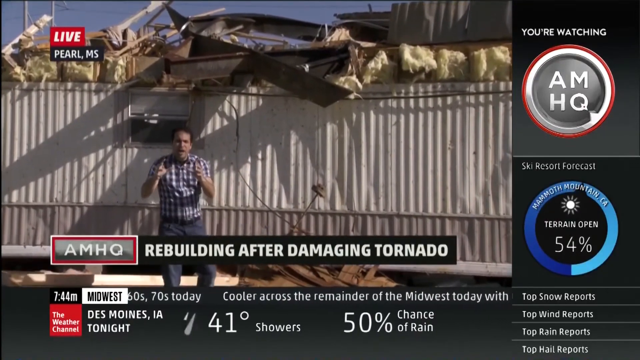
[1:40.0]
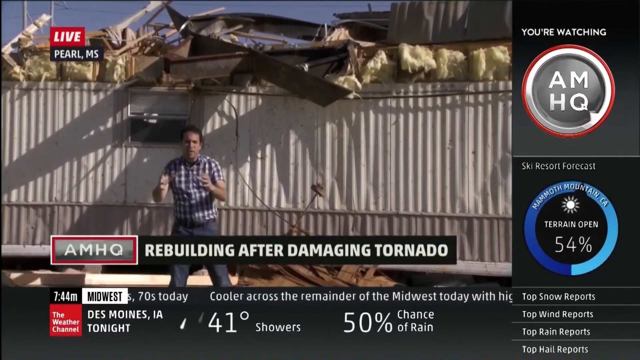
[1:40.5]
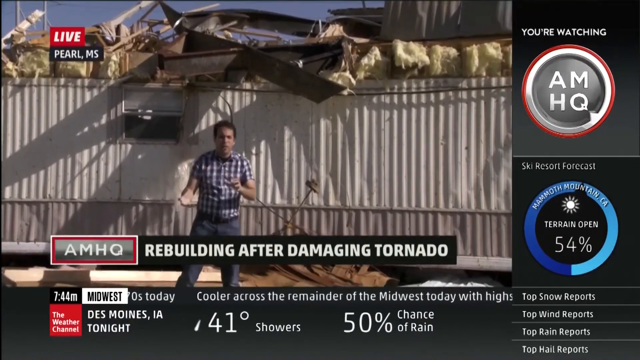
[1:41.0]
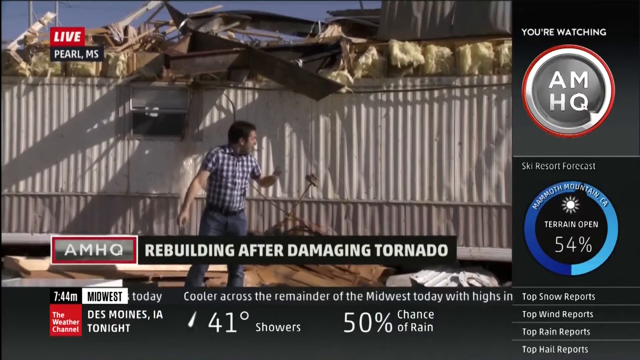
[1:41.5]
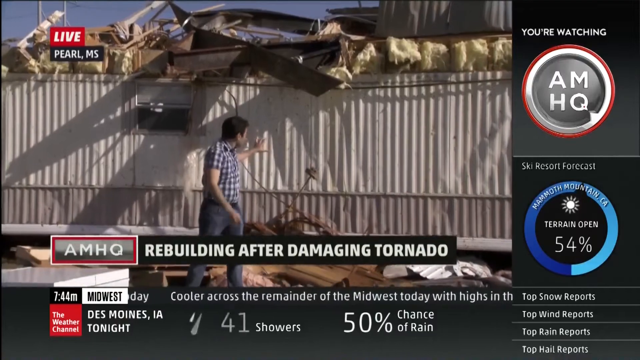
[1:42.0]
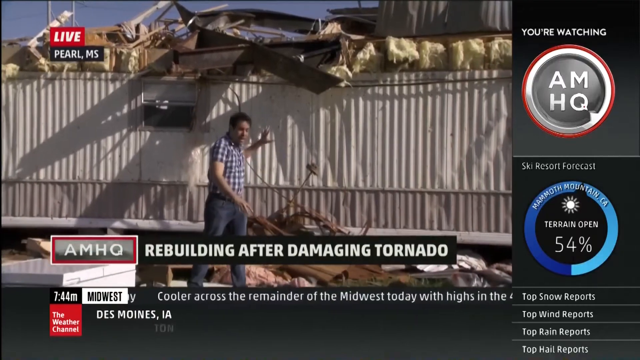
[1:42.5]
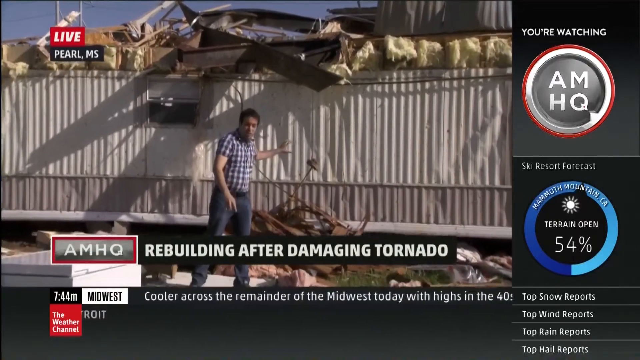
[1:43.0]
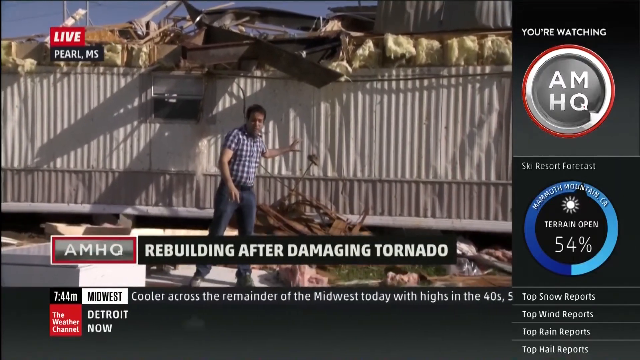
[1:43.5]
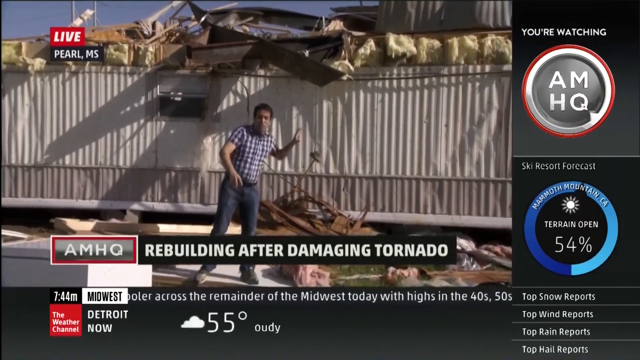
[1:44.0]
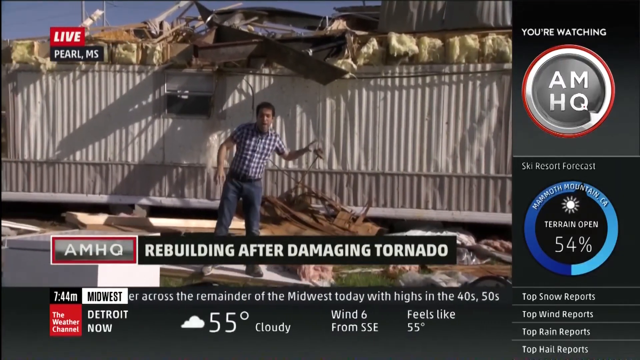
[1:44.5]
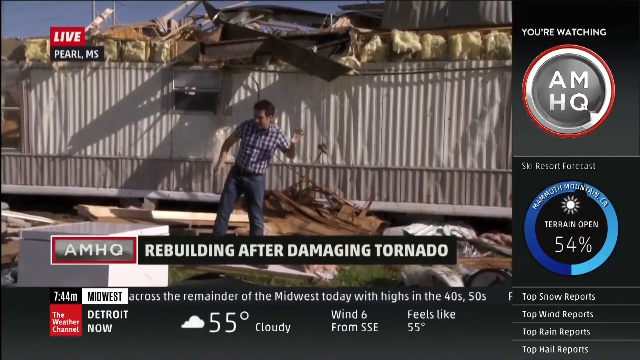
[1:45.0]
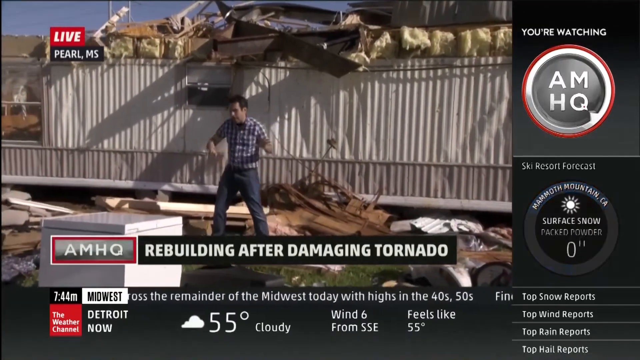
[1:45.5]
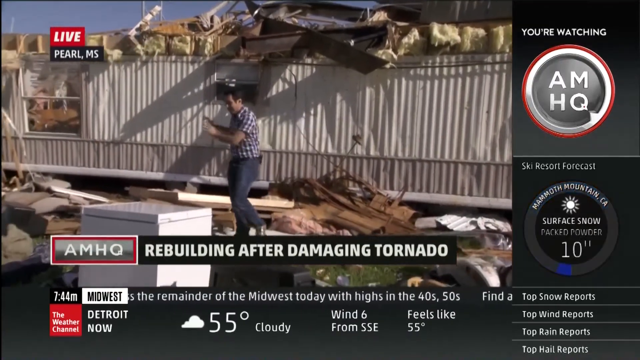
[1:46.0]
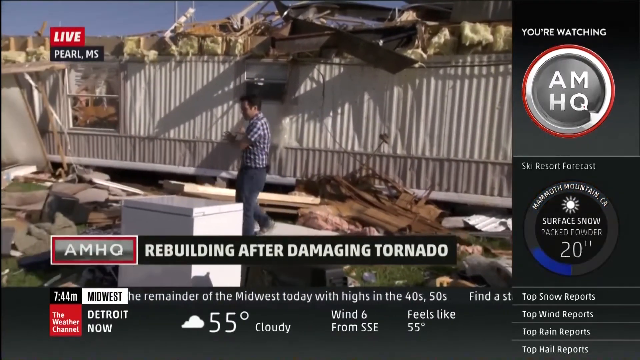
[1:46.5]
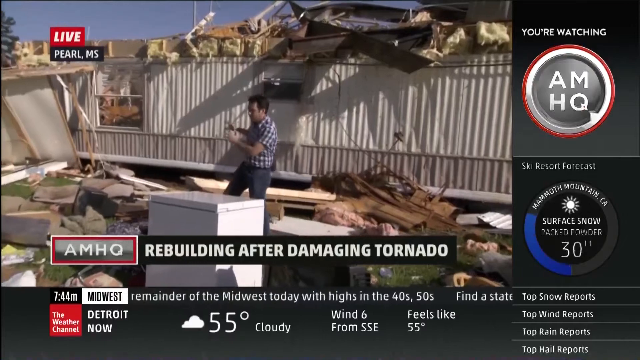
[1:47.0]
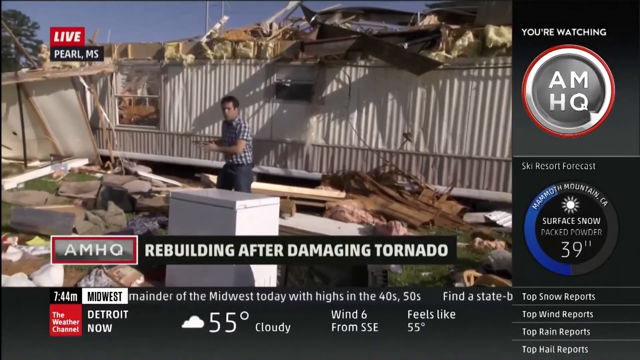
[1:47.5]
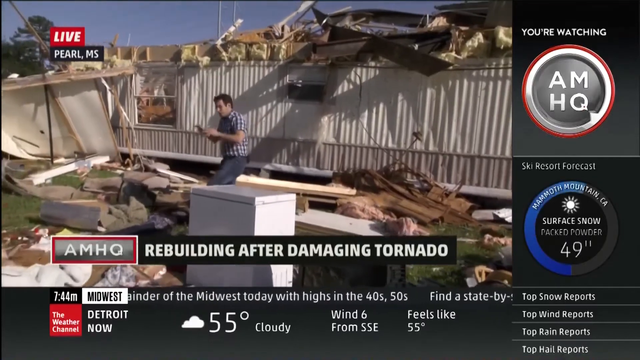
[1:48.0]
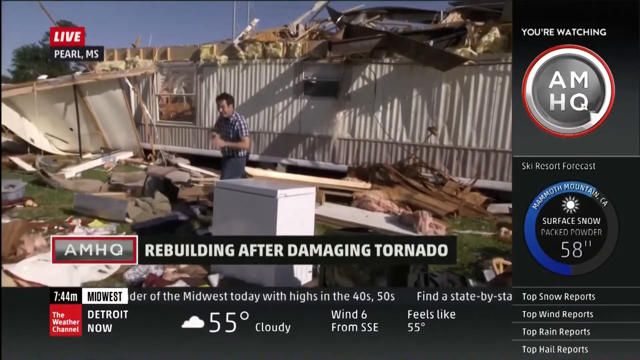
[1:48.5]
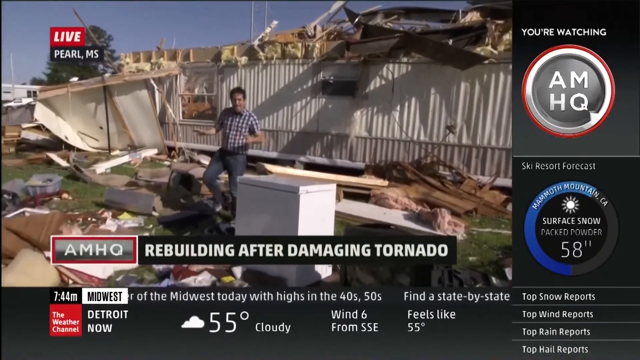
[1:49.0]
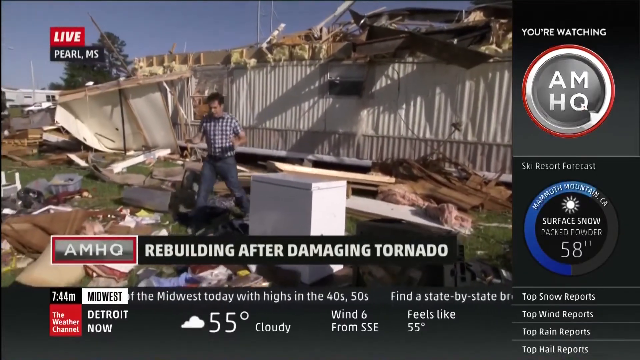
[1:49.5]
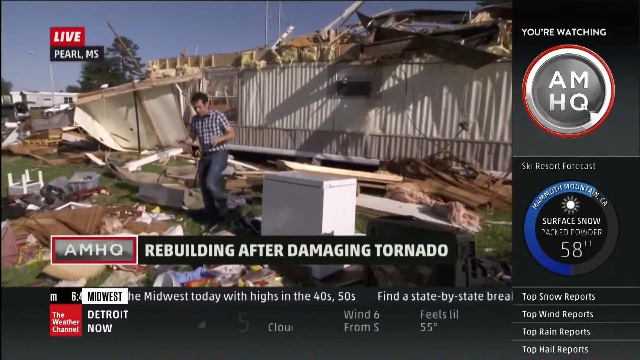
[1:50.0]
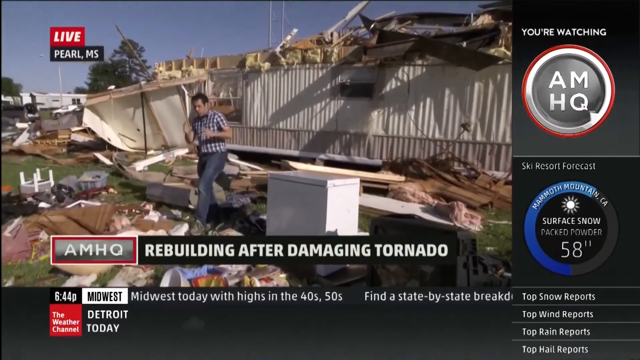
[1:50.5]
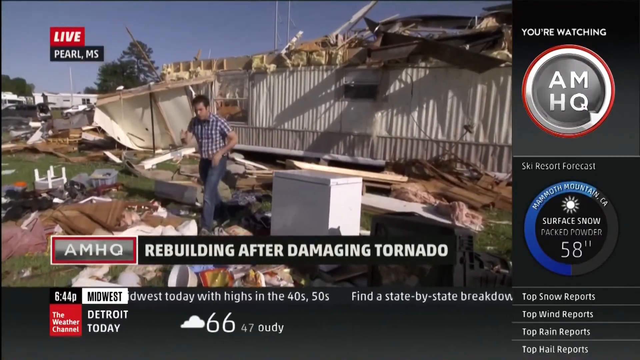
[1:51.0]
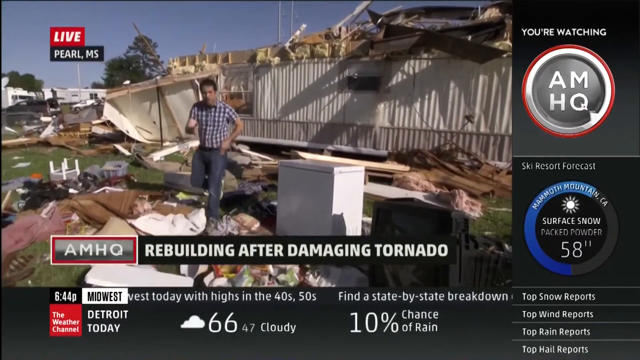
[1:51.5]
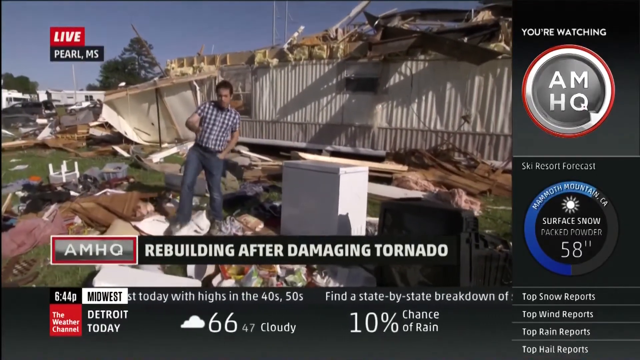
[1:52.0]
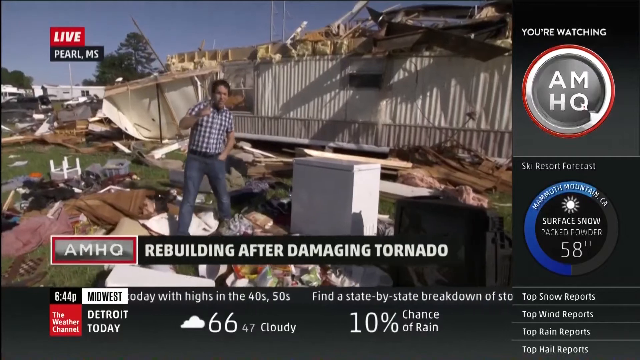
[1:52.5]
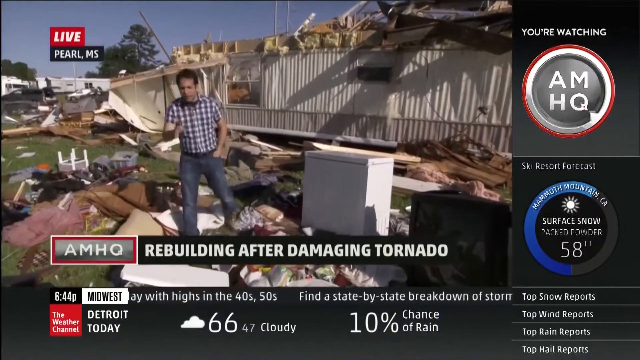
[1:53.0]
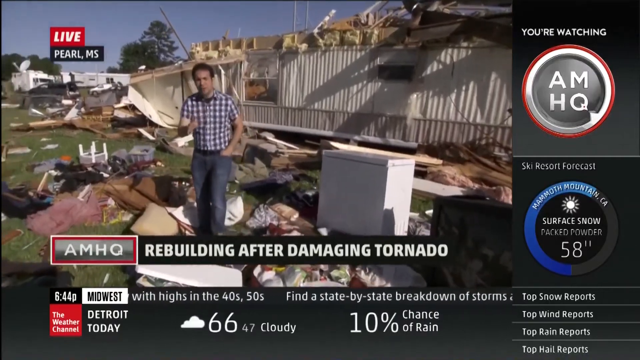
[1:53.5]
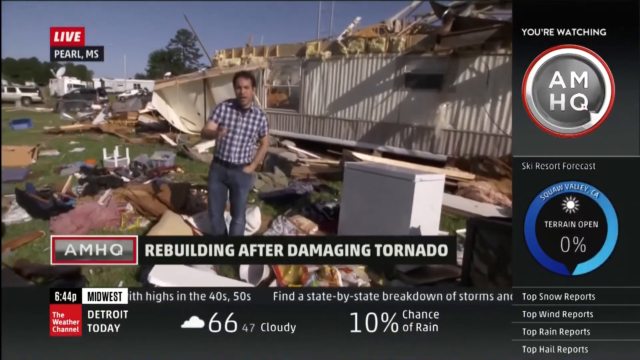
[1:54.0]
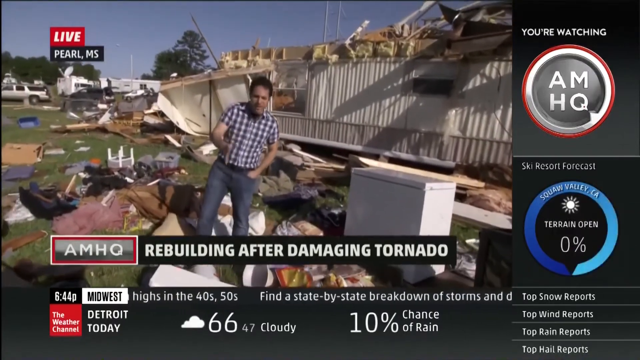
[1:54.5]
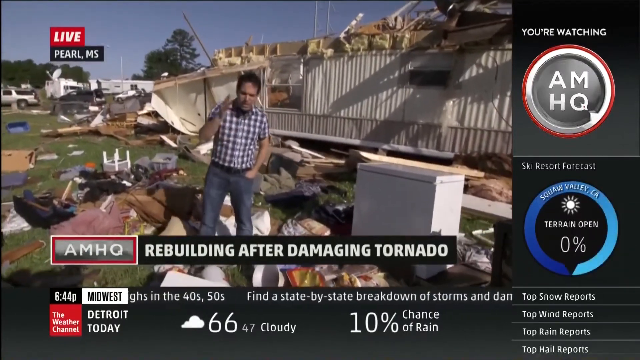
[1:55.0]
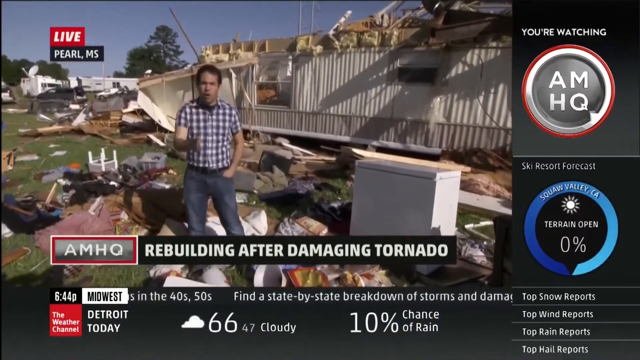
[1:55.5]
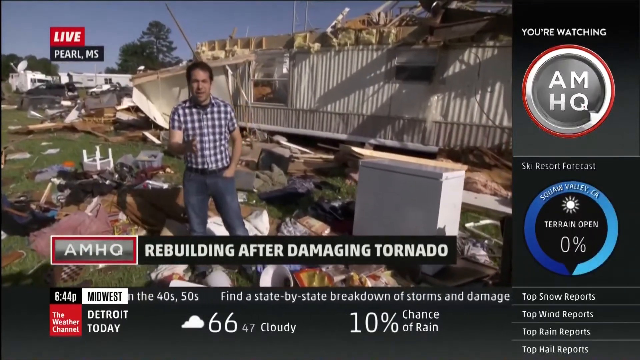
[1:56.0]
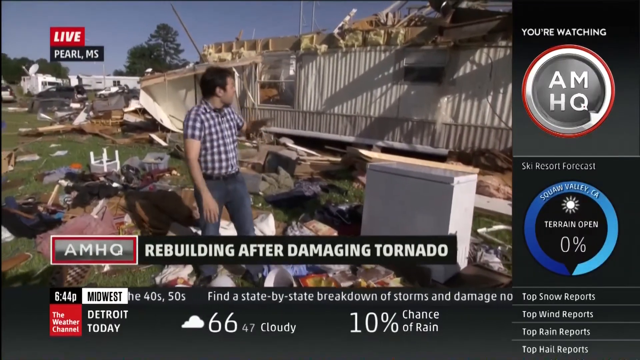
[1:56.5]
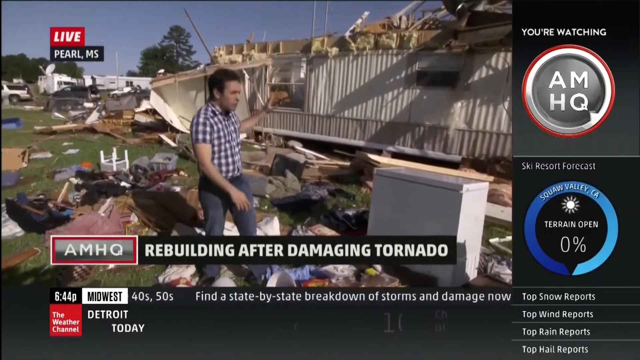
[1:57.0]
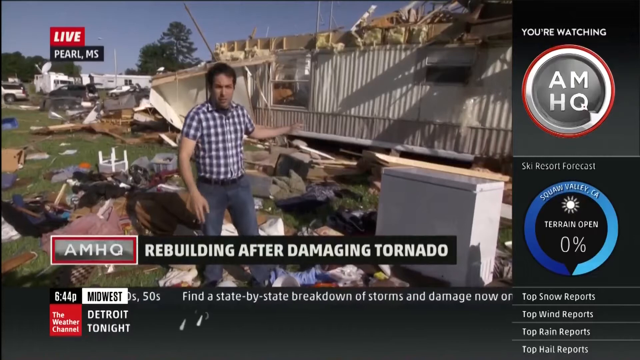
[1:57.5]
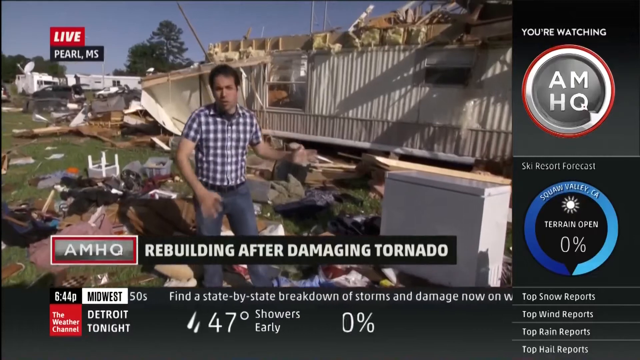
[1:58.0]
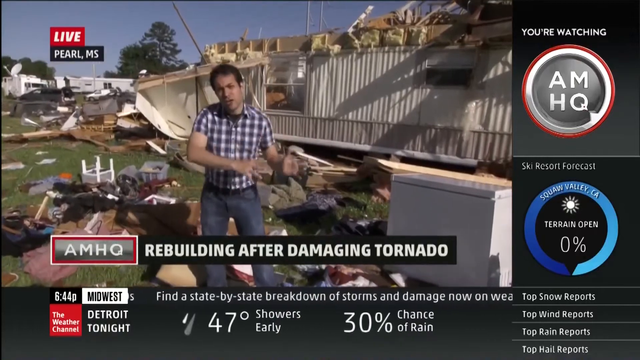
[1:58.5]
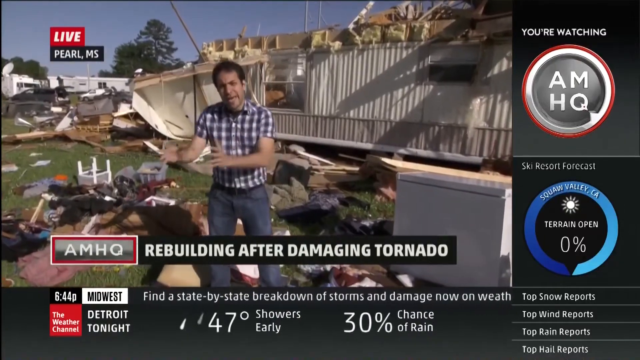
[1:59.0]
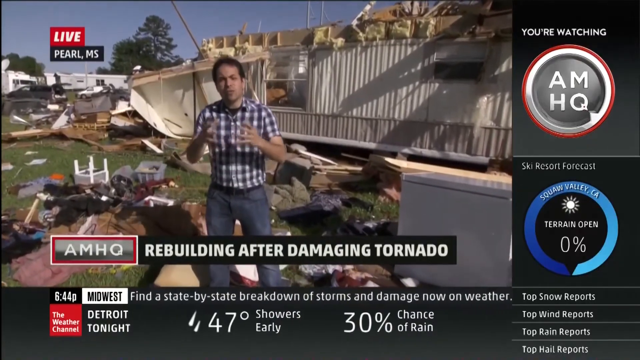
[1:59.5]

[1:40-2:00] Dave is still at the scene. He walks out of the scene or comes closer to the camera while still explaining and demonstrating, moving his body and moving his hand out. From his expression, it seems as if he was there and witnessed what happened. The location shows a very big disaster caused by the tornado.